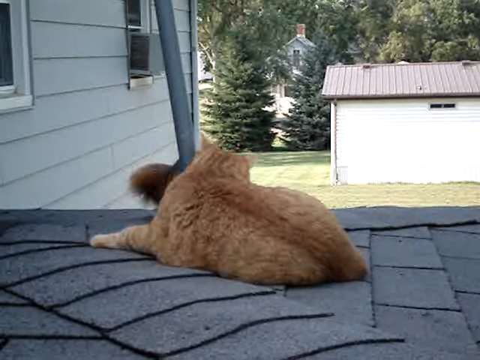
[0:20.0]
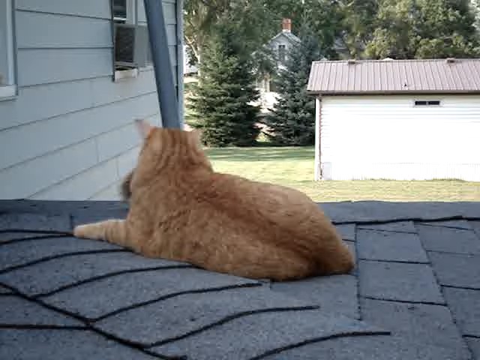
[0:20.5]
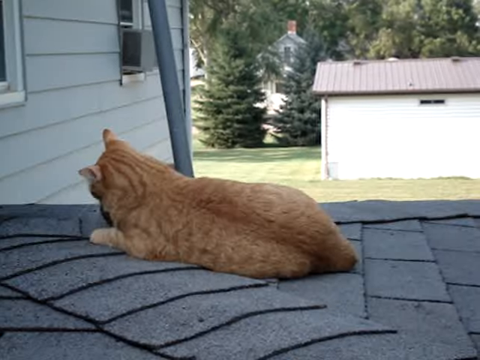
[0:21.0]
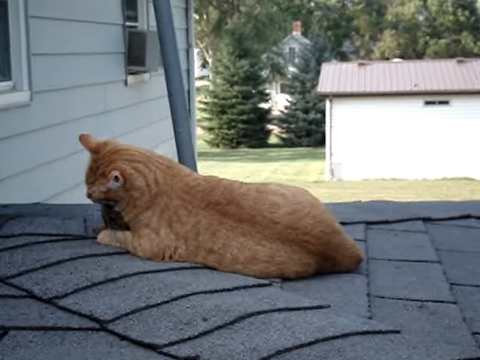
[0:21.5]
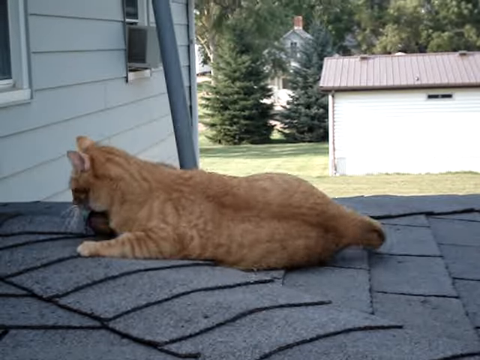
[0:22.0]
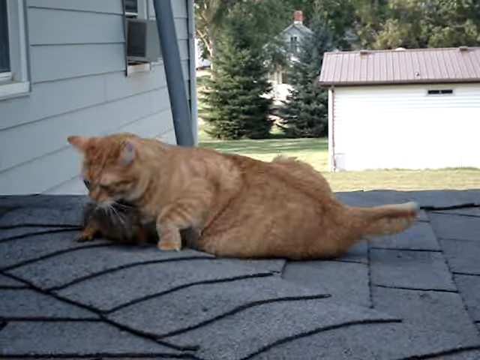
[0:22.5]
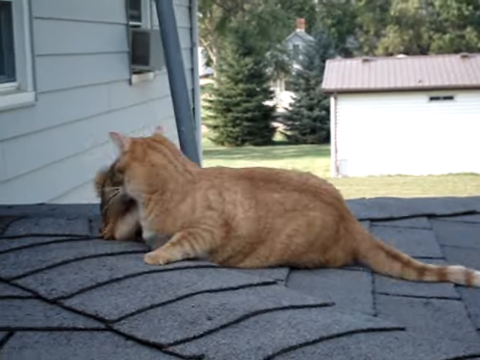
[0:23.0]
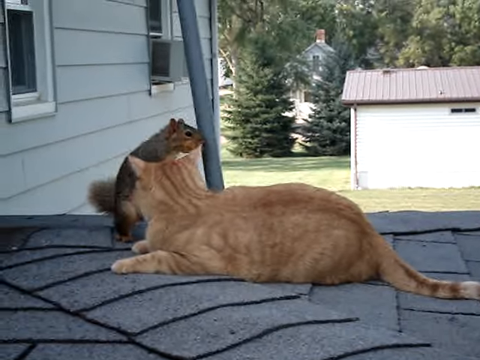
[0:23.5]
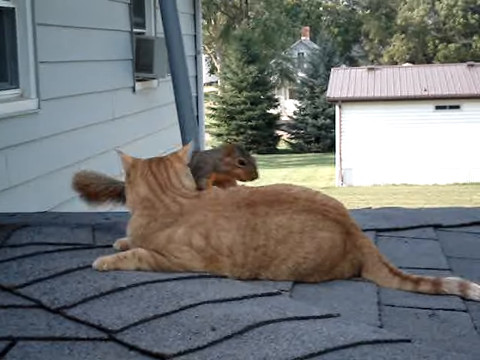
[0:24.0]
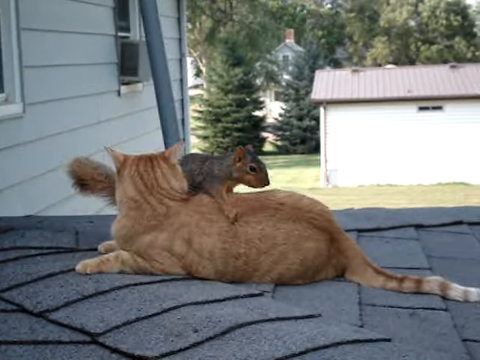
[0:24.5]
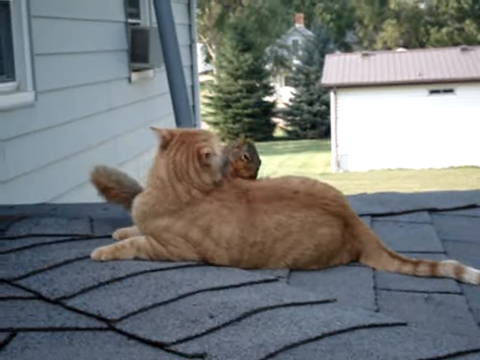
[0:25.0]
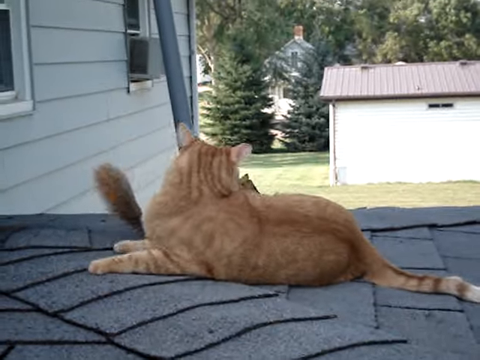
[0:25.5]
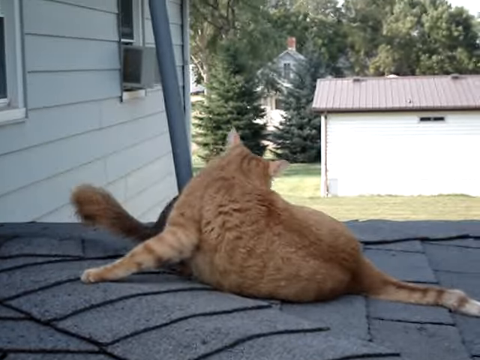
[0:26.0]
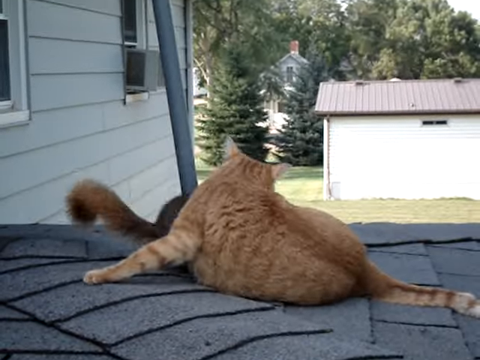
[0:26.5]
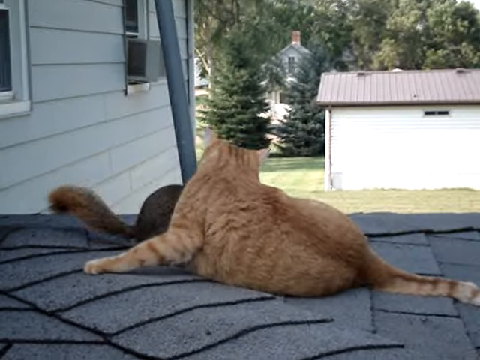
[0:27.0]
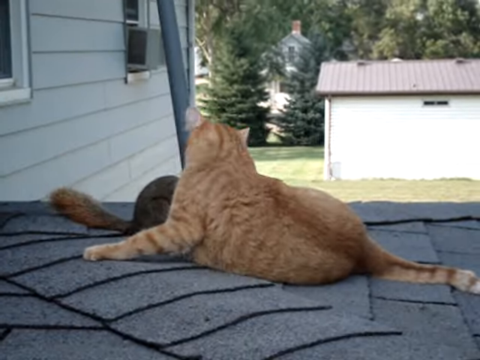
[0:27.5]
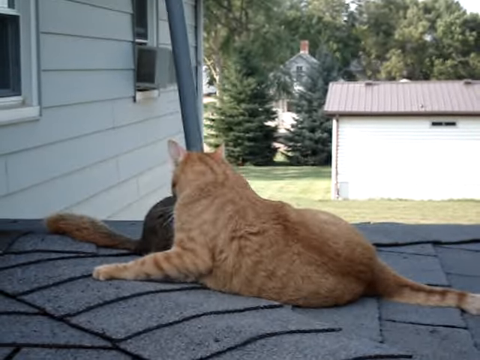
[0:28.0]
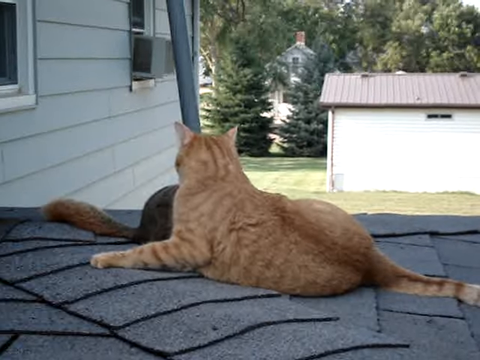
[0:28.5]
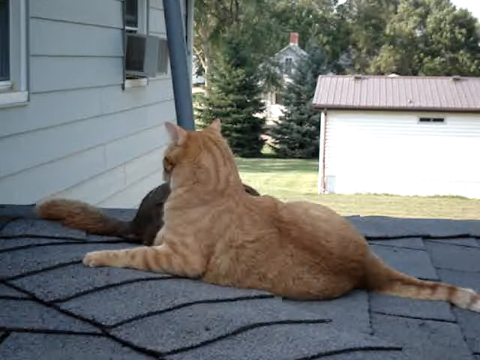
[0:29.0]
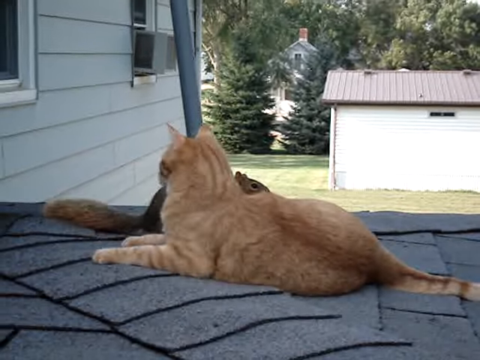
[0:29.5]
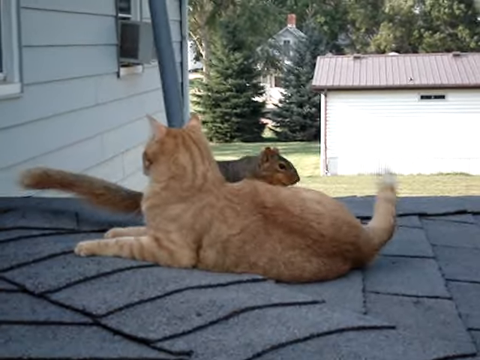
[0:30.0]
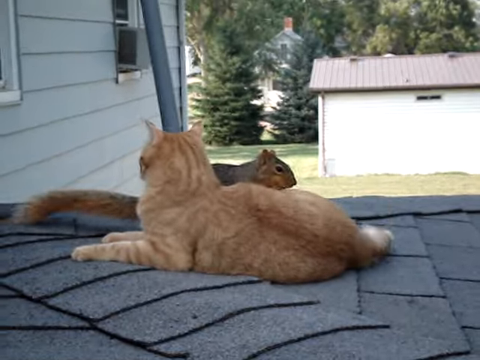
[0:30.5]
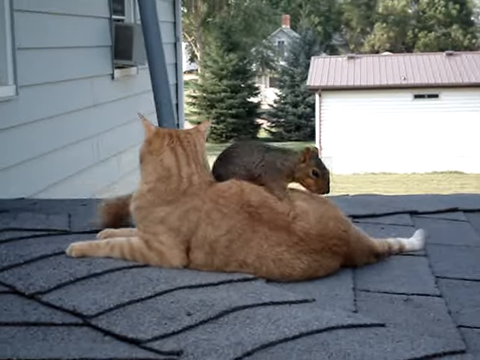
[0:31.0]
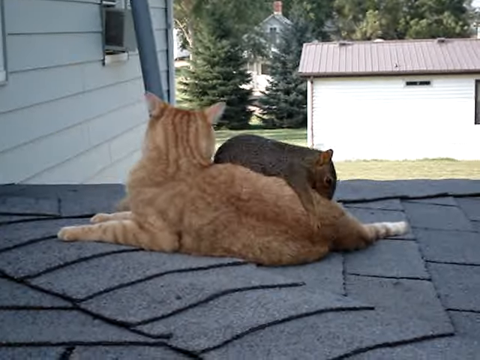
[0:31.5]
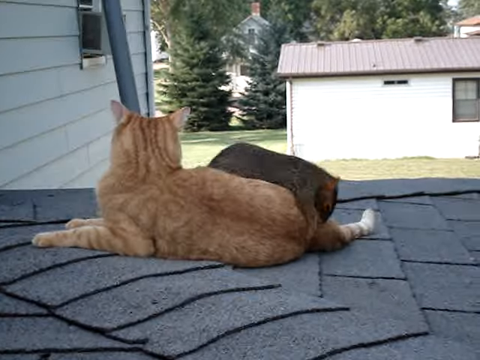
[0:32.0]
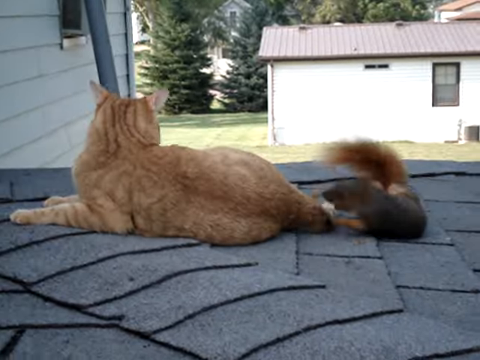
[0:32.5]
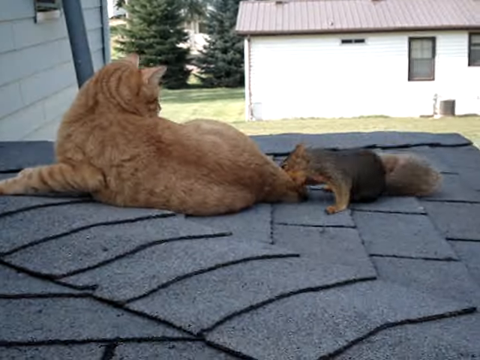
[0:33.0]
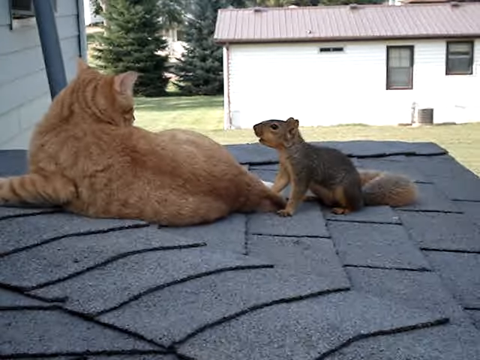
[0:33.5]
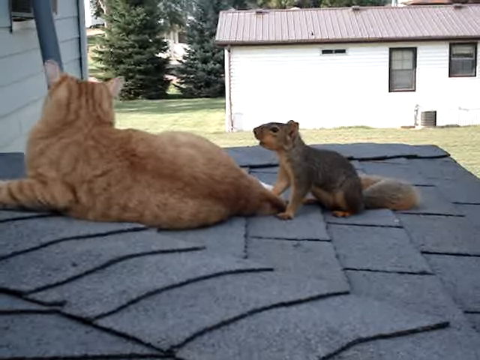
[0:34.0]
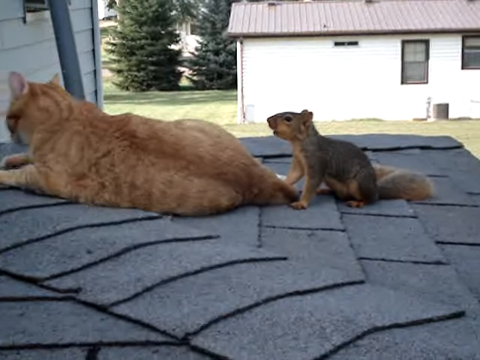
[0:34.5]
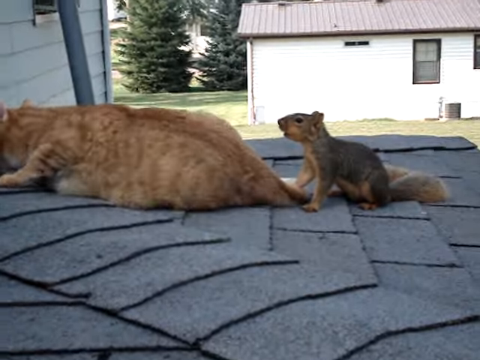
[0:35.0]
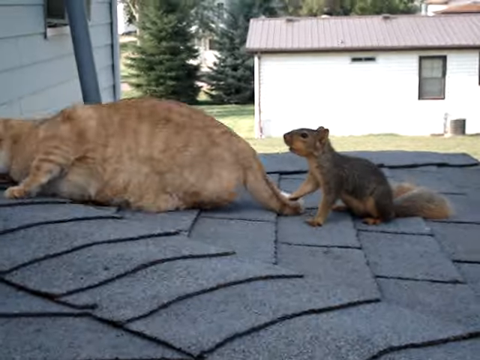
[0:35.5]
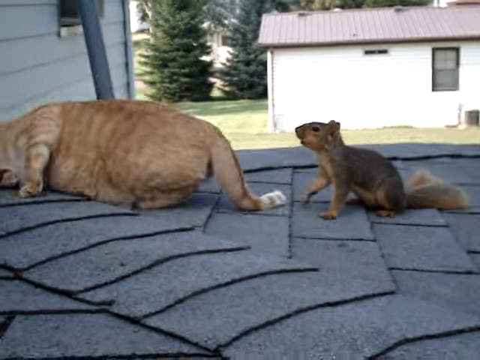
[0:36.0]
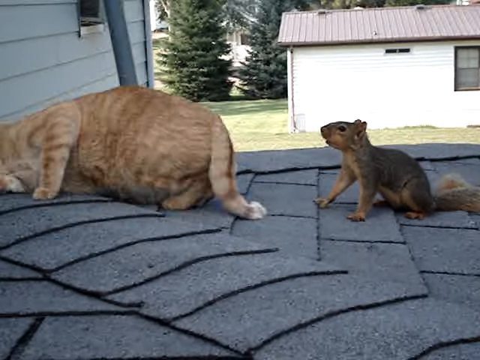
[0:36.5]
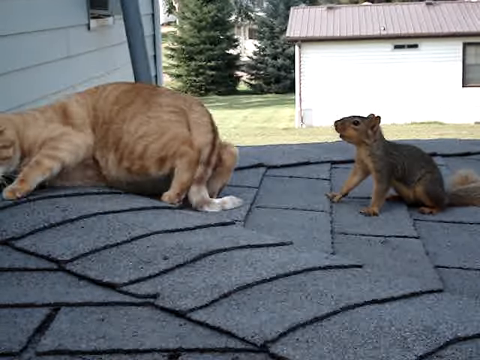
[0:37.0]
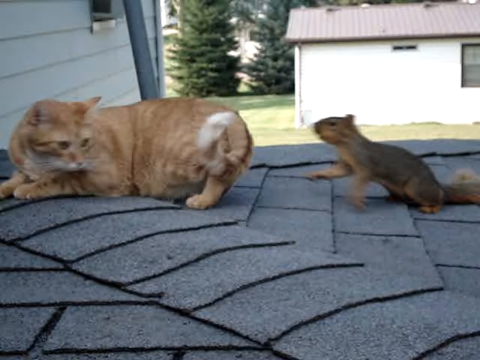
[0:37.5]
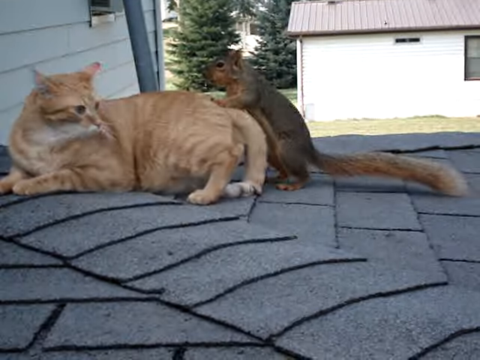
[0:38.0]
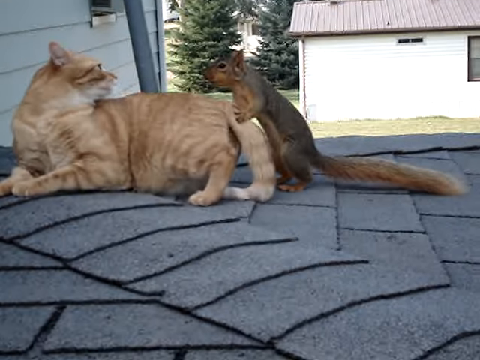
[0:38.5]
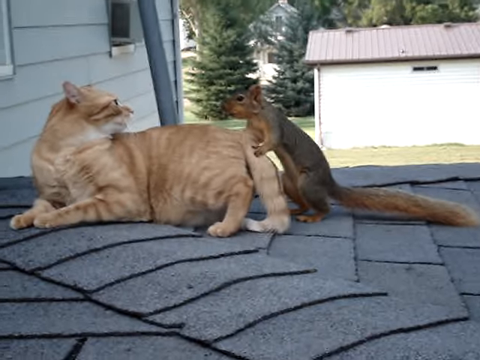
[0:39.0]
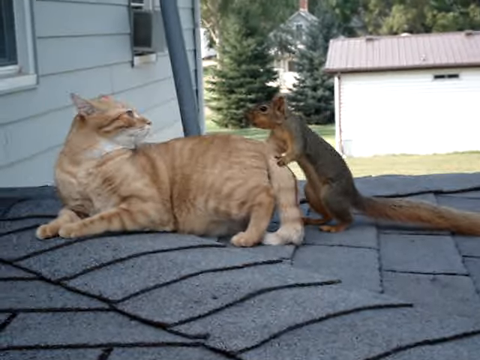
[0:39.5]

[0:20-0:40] The two animals keep playing on the roof of a home outside, and more of the house comes into view: it is a light pastel green, with some windows on the side. The camera is zoomed in a bit. The cat lies on its side watching the squirrel, which jumps around it; every time the cat's tail moves, the squirrel jumps to bite it. The cat looks up at the squirrel and the squirrel looks up at the cat for a few seconds, and then they continue playing. The cat looks like it is going to bite the squirrel, but they appear to be playing. The squirrel keeps running on top of the cat and then runs down, and the cat picks up its head and looks at the squirrel. They keep playing for a few seconds, with no aggressiveness visible.